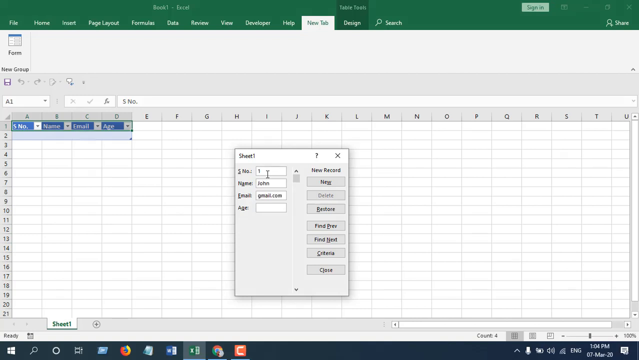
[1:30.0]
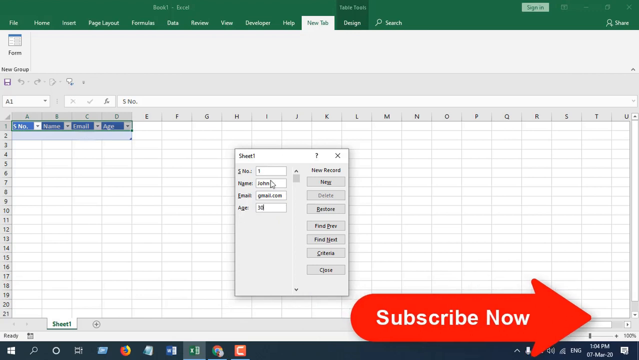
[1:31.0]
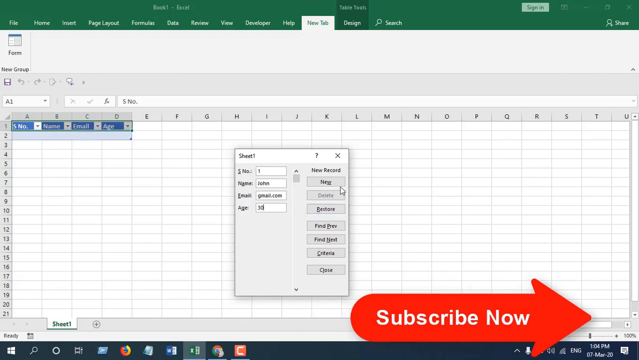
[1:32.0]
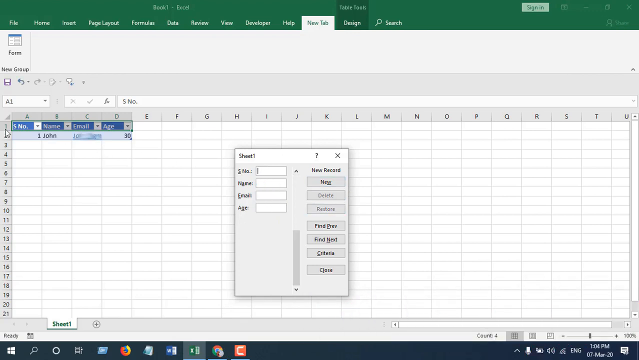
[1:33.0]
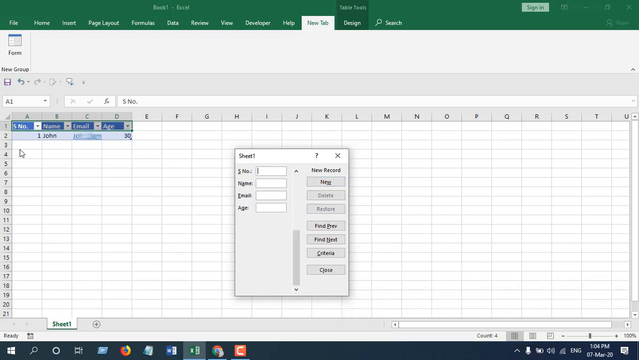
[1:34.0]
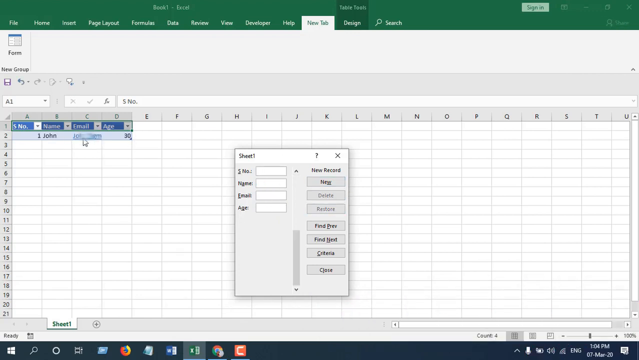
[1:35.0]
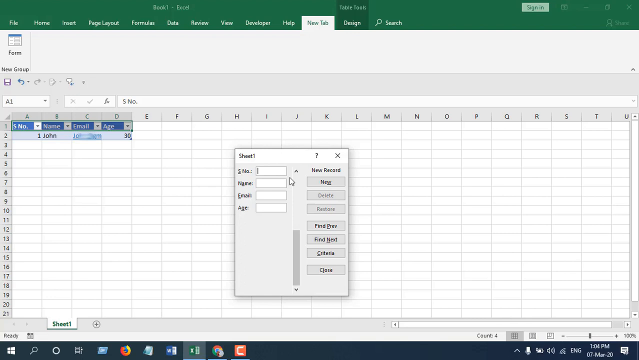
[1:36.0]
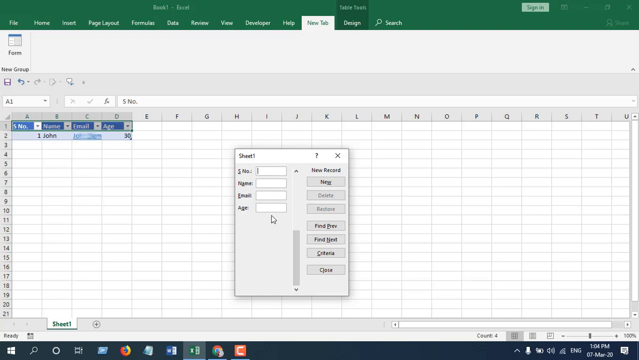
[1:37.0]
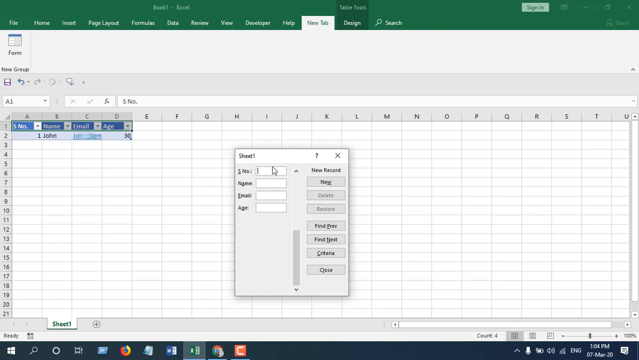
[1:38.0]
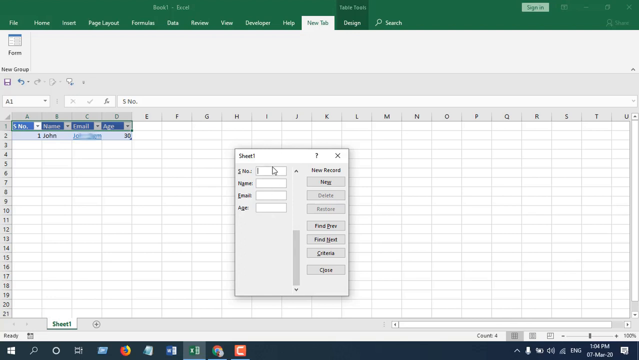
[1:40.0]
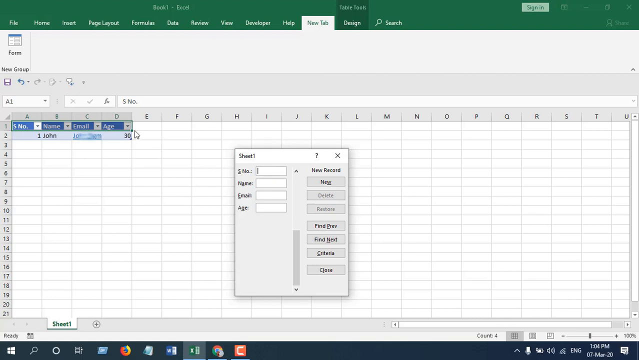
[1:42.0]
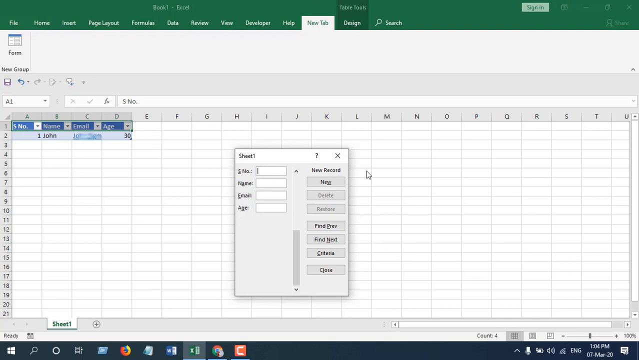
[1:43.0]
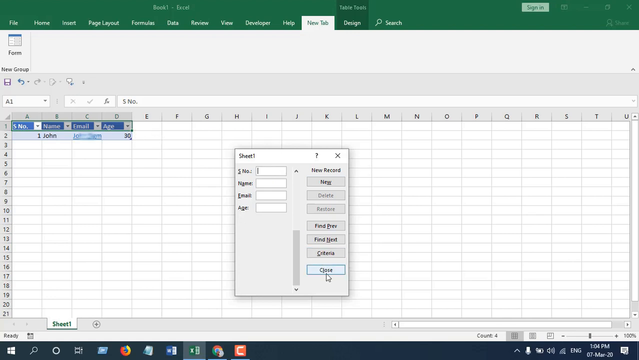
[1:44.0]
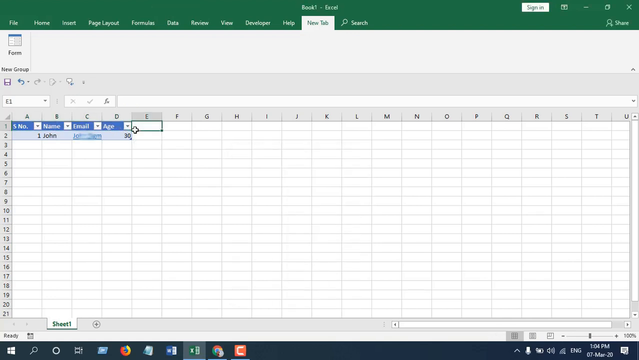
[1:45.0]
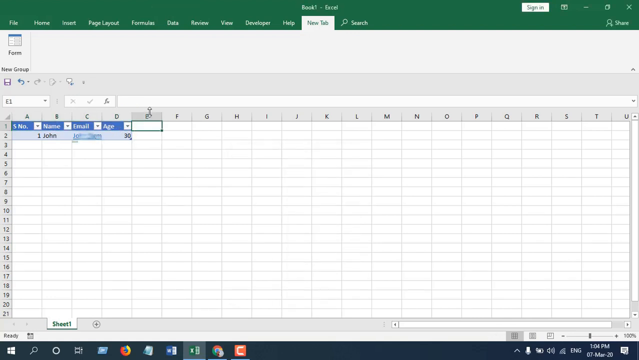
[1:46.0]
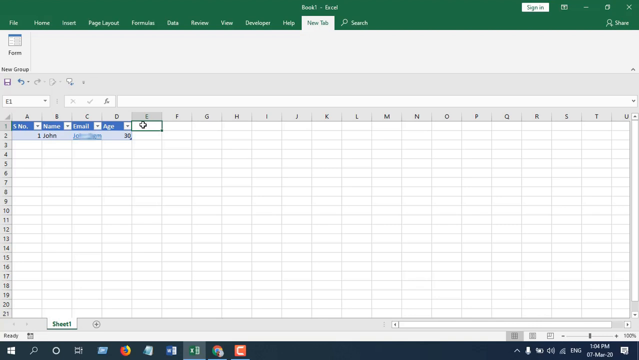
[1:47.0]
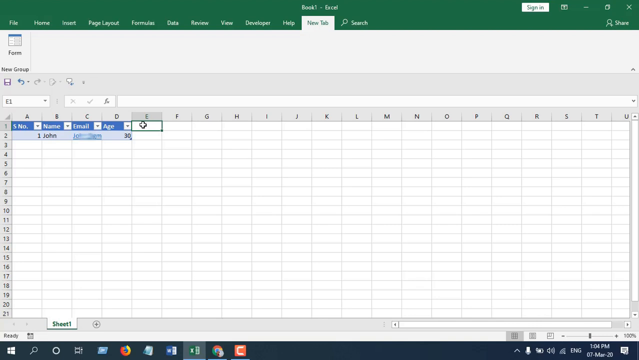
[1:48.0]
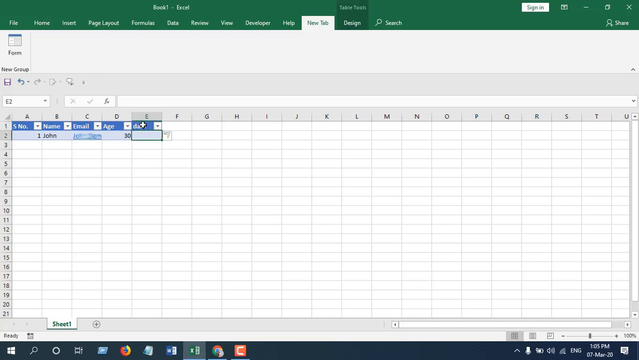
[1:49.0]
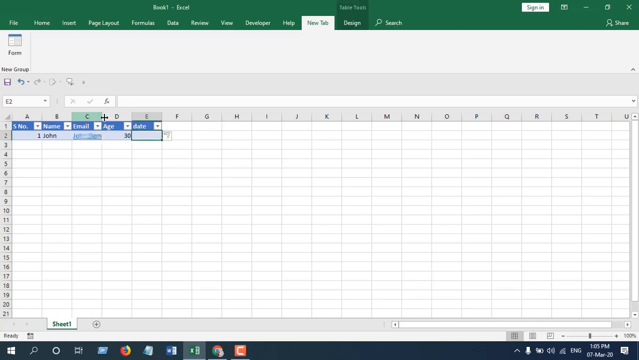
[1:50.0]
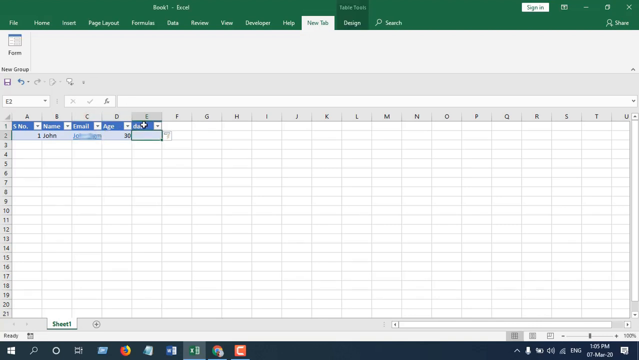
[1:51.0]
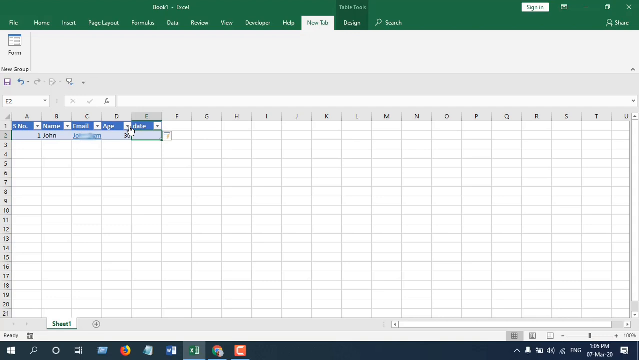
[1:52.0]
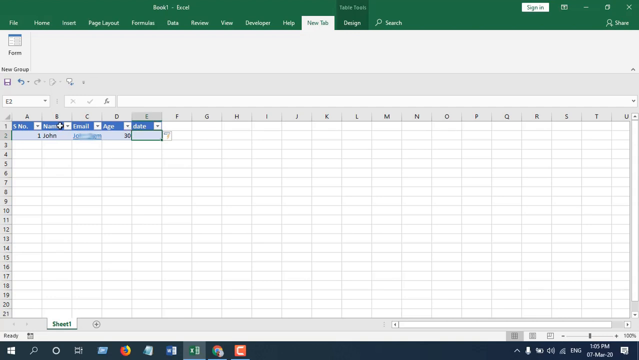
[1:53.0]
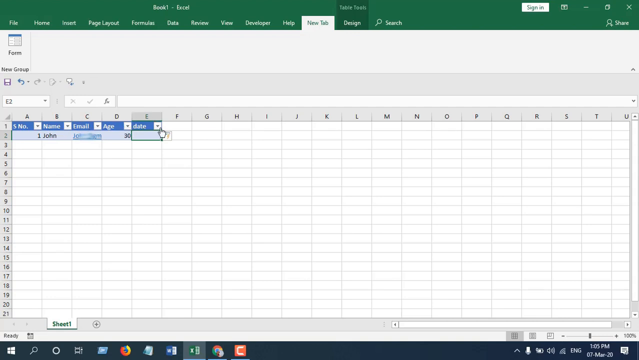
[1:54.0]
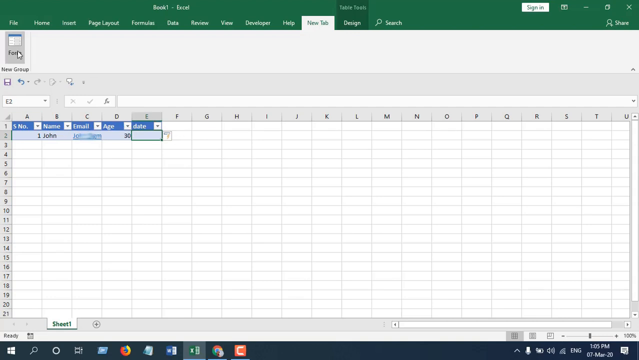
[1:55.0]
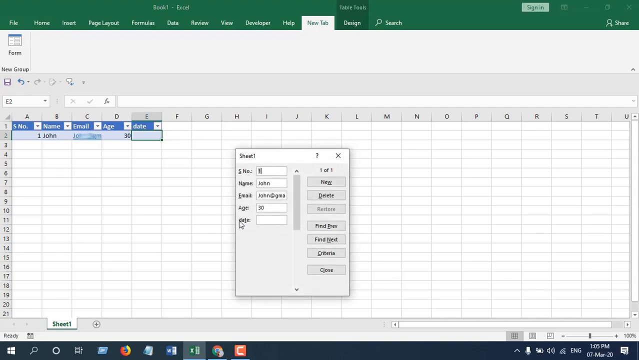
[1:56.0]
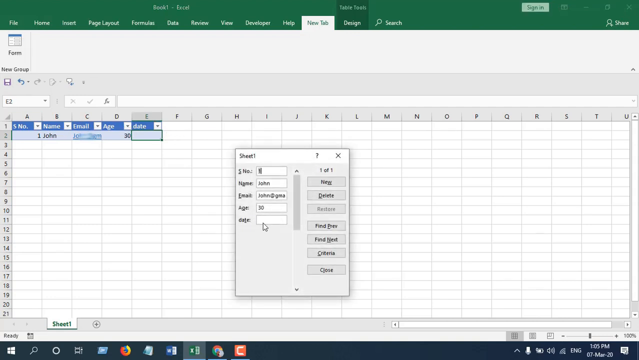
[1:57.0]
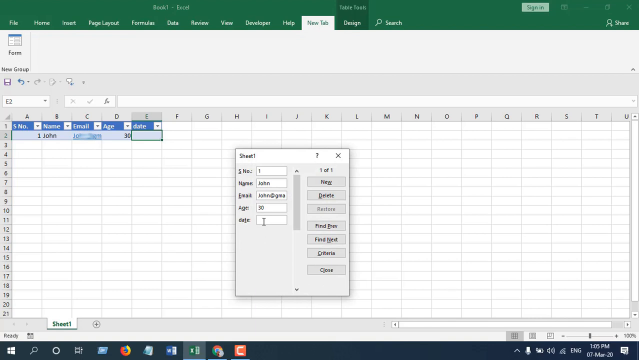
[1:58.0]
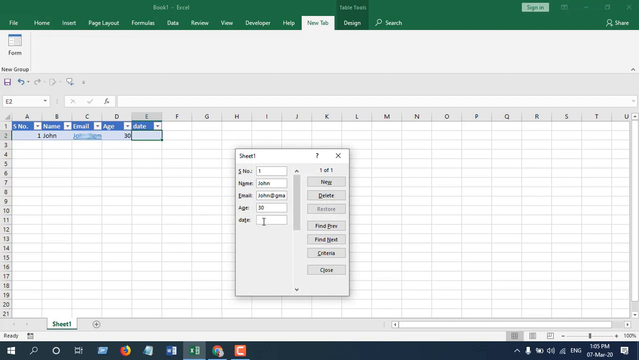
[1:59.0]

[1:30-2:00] The user adds a new column called date to the columns already created.